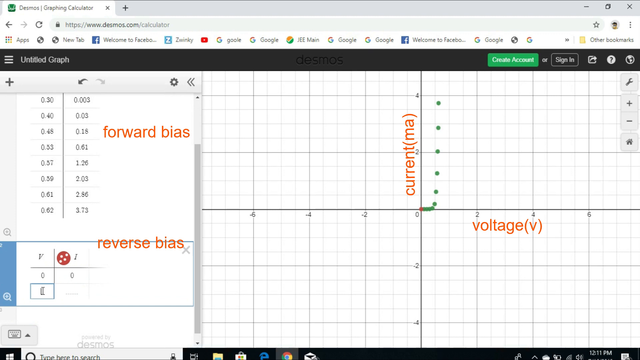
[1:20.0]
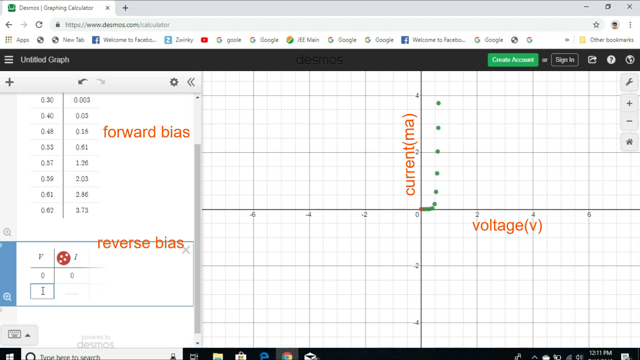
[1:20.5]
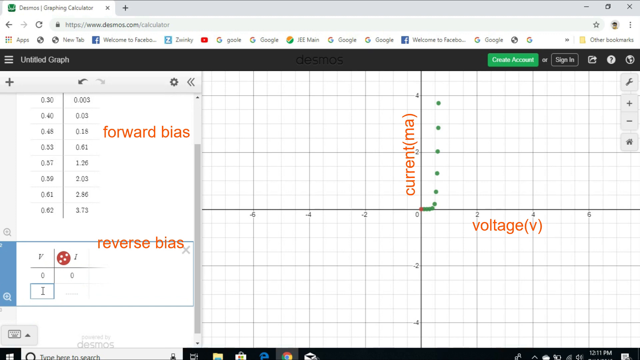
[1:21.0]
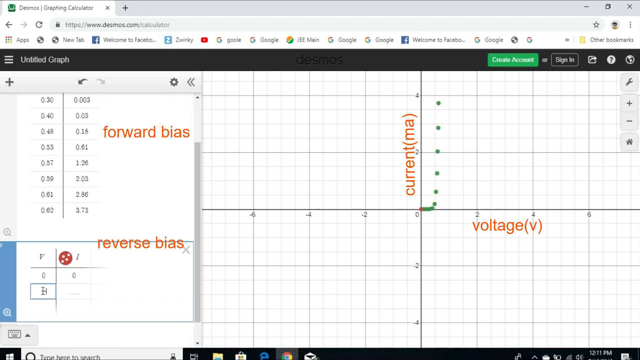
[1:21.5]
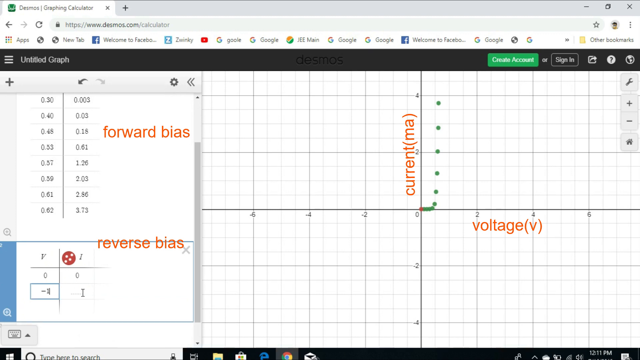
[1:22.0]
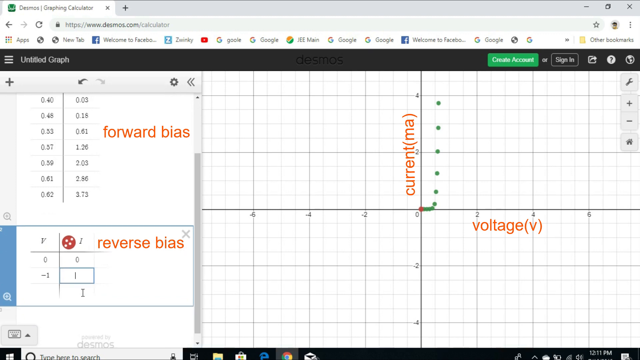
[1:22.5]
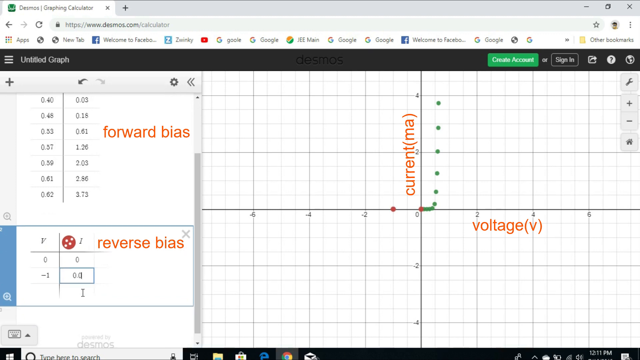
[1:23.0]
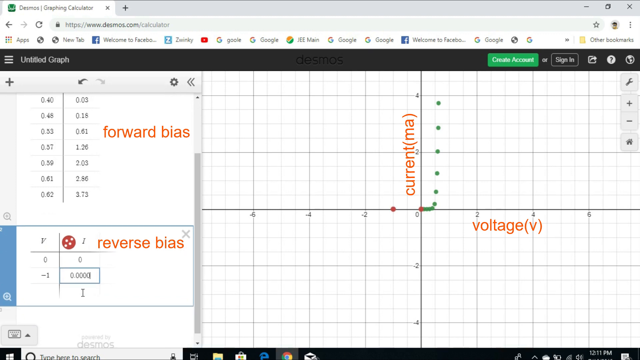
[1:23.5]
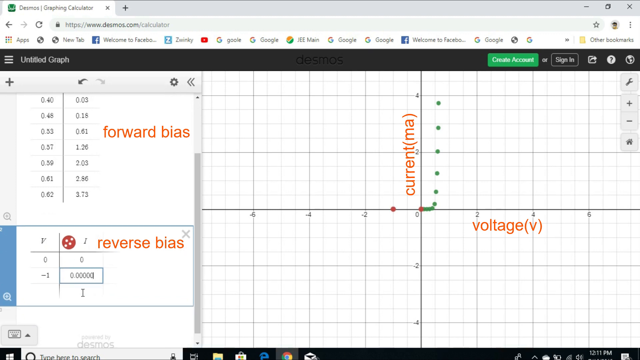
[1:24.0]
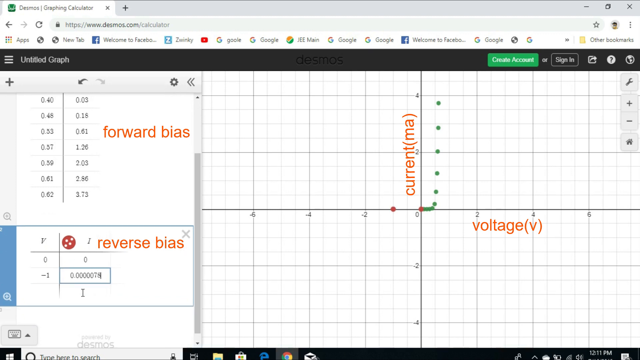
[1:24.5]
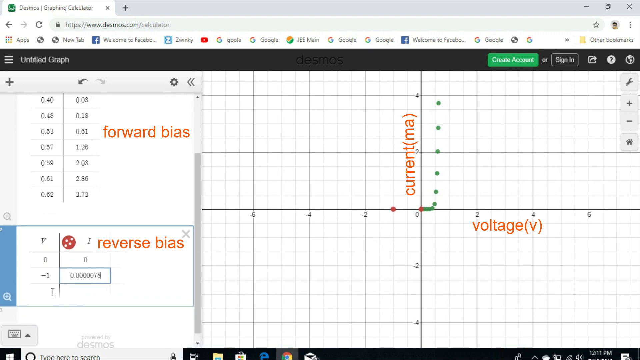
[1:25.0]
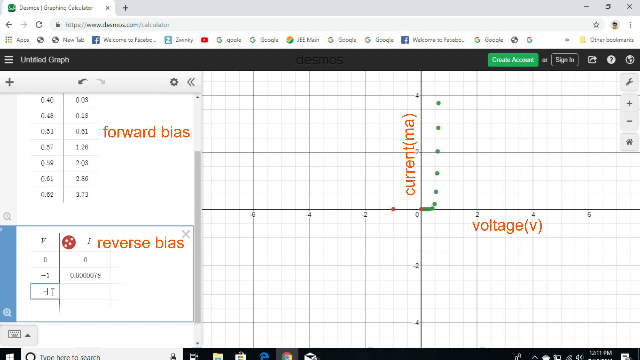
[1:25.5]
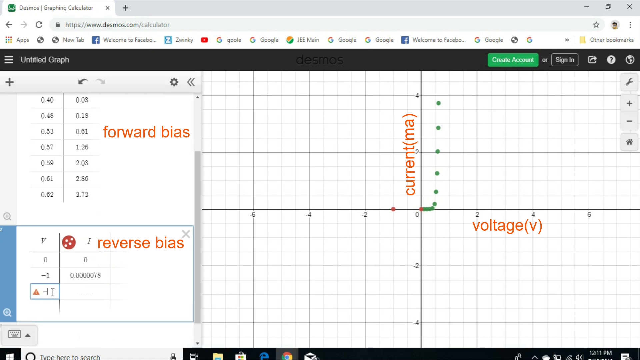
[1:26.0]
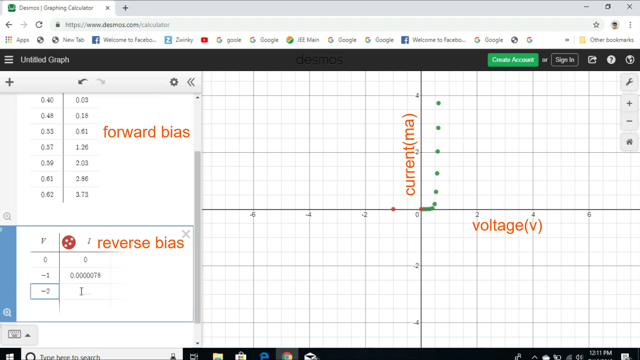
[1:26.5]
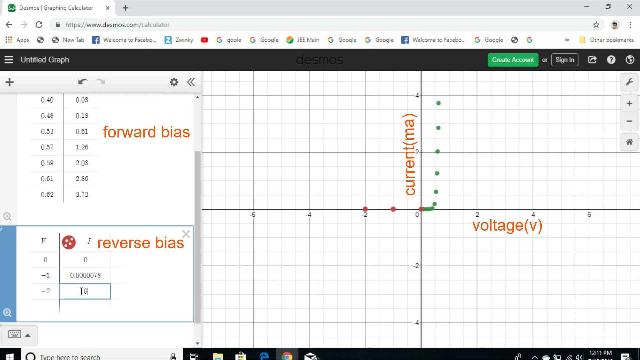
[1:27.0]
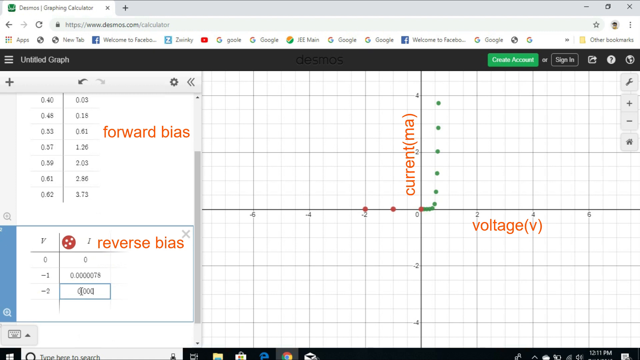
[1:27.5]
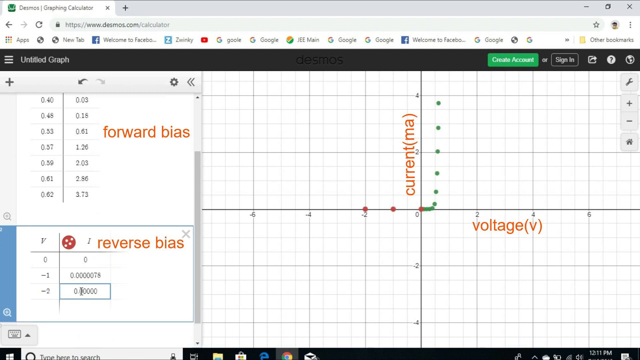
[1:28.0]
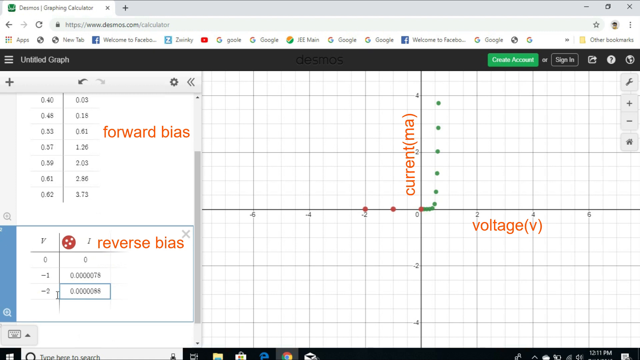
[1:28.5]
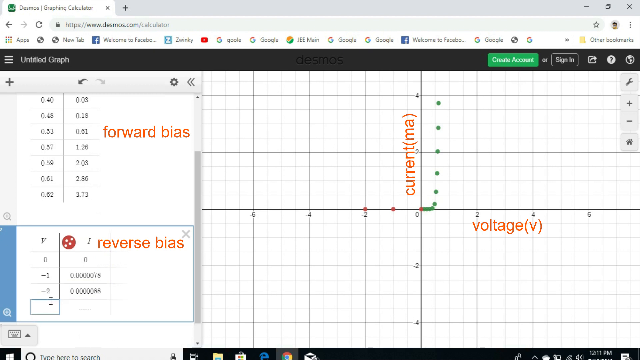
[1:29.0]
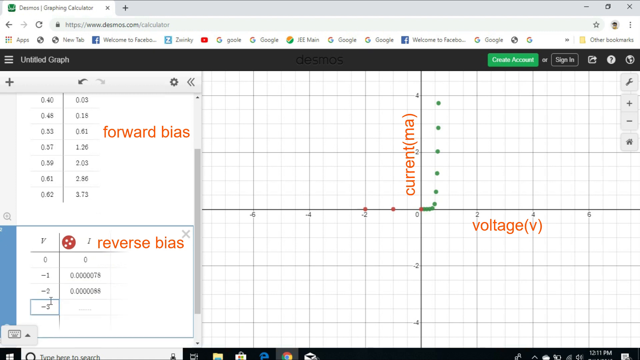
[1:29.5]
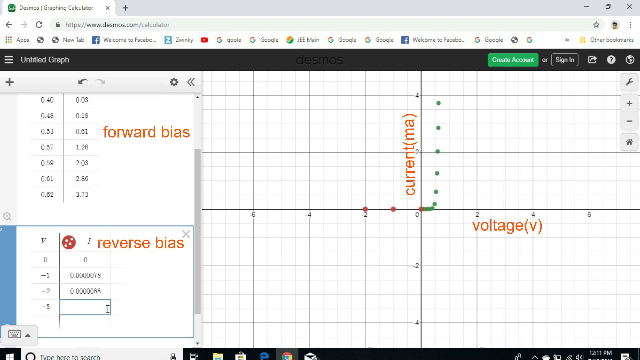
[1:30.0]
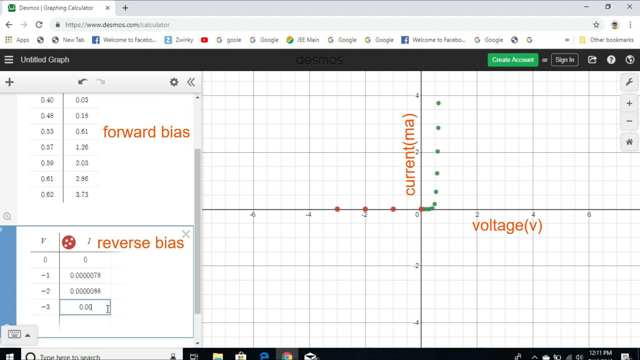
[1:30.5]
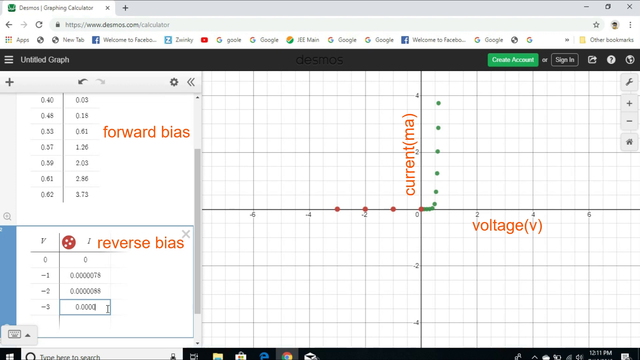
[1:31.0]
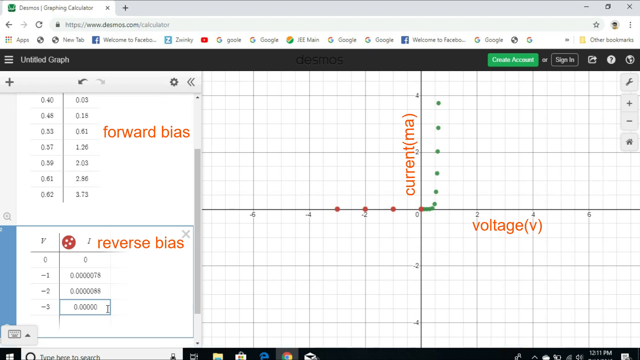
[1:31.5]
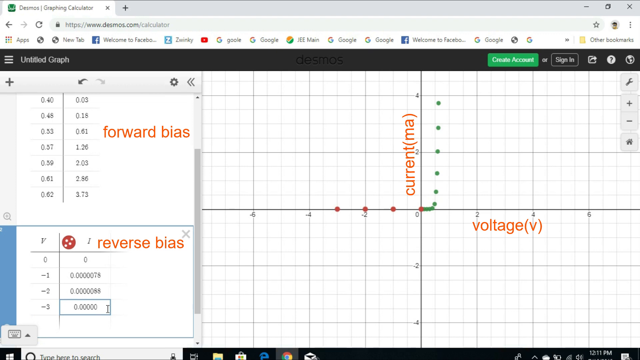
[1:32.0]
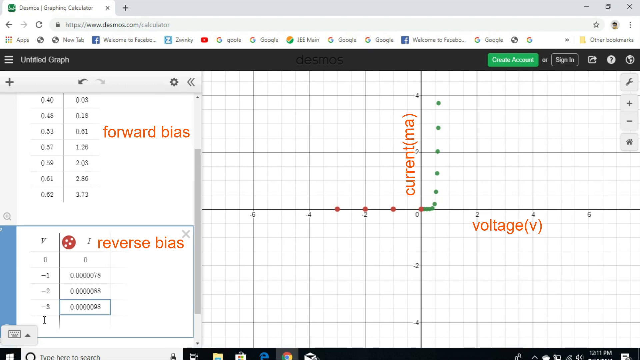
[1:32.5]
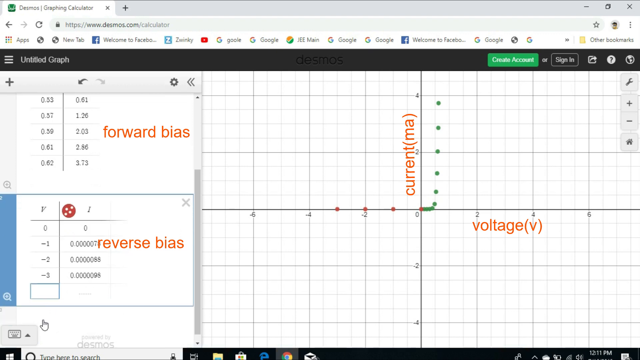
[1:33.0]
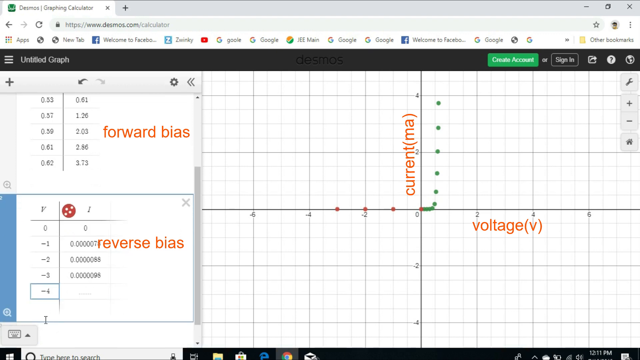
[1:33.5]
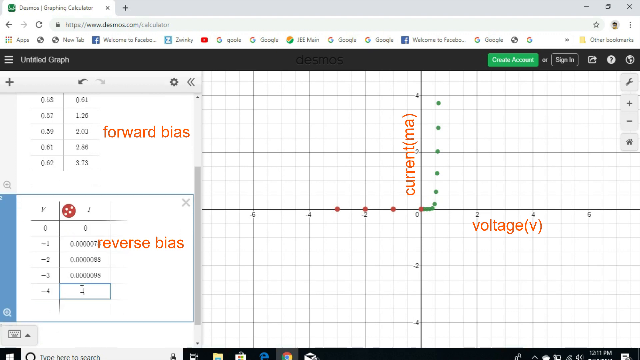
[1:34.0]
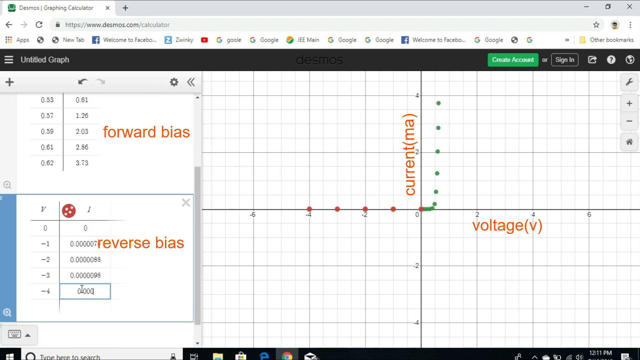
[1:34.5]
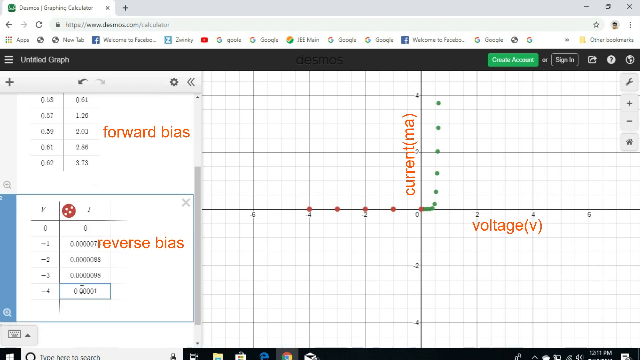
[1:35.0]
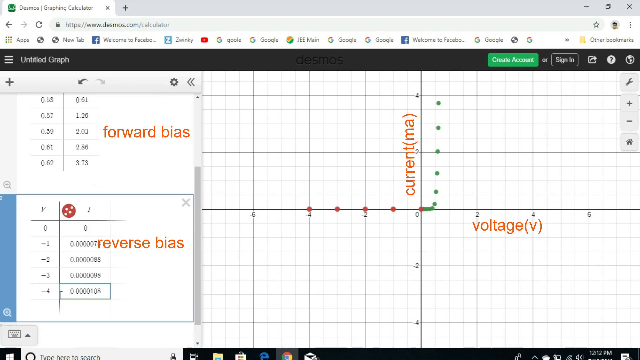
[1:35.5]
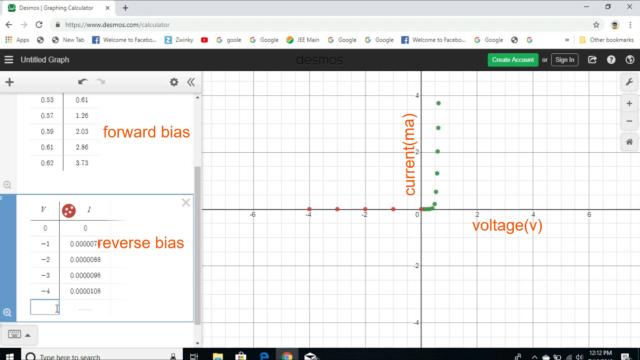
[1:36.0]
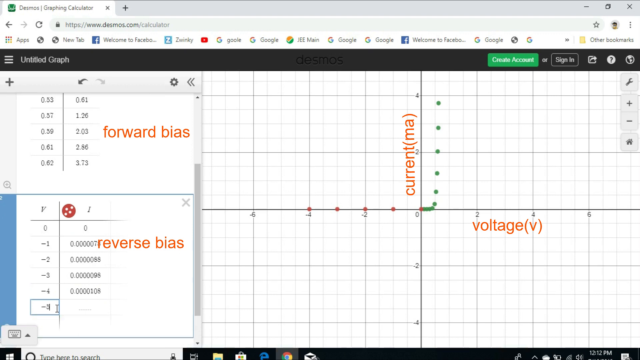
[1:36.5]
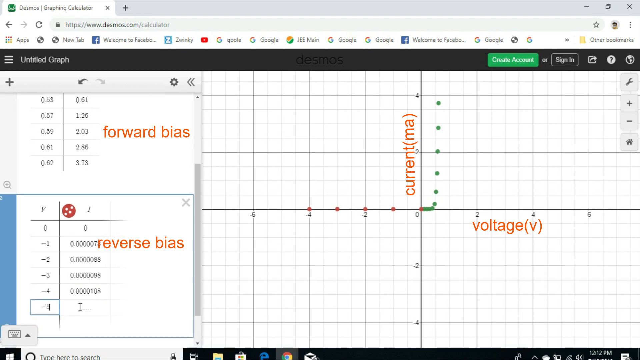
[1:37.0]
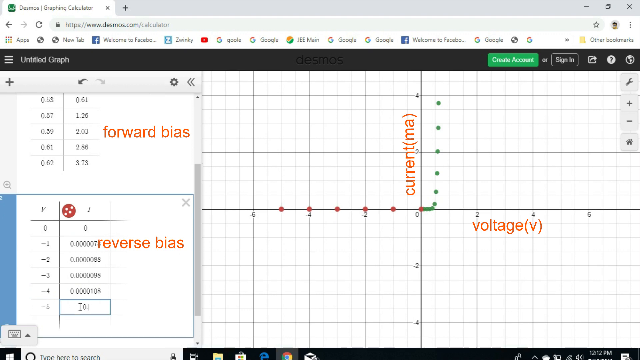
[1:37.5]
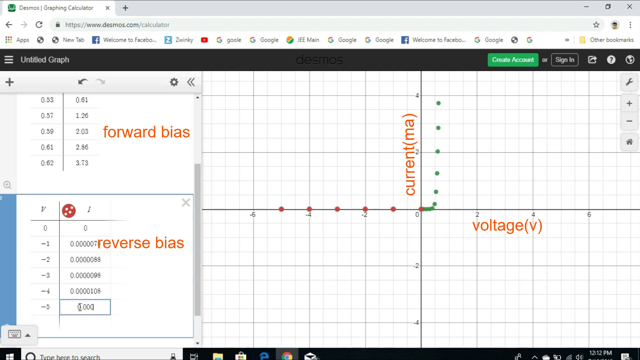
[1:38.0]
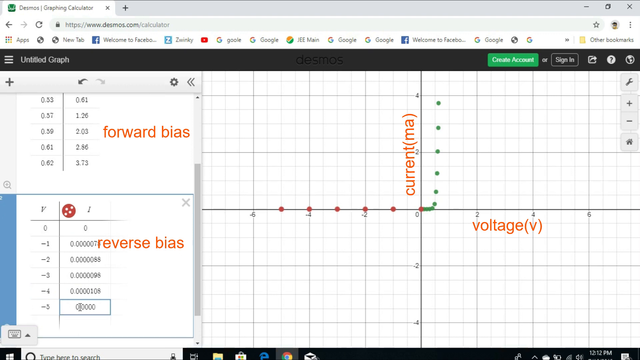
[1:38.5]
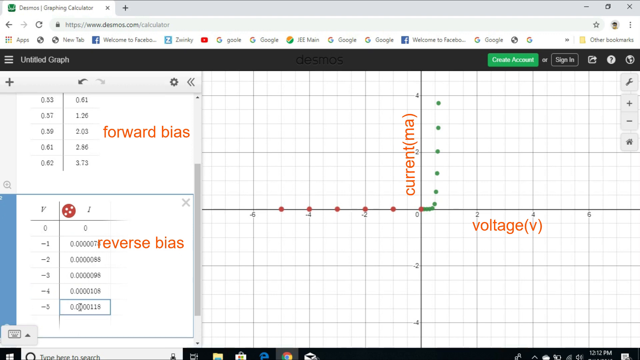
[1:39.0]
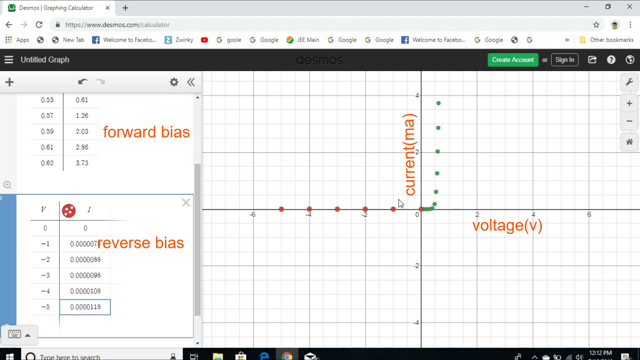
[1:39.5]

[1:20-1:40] Values are now added to the second table: 0 and 0 in the first row, then negative 1 and 0.0000078, negative 2 and 0.0000088, negative 3 and 0.0000095, negative 4 and 0.00000108, and negative 5 and 0.00000118. The graph seems to form a line of dots spaced equally apart, starting from the middle and extending to the left. The y-values look pretty much the same, with no visible difference, apparently because the graph is not zoomed in enough for the scale. These dots are red, while the first table's dots were green.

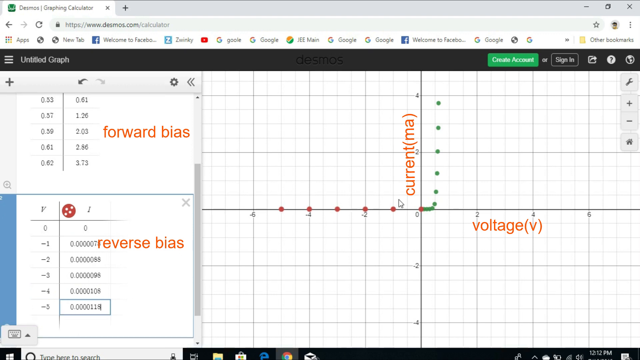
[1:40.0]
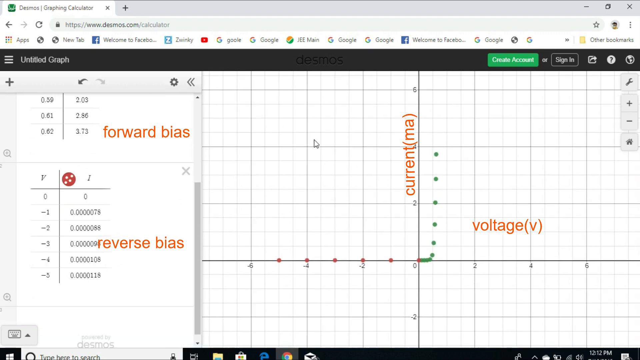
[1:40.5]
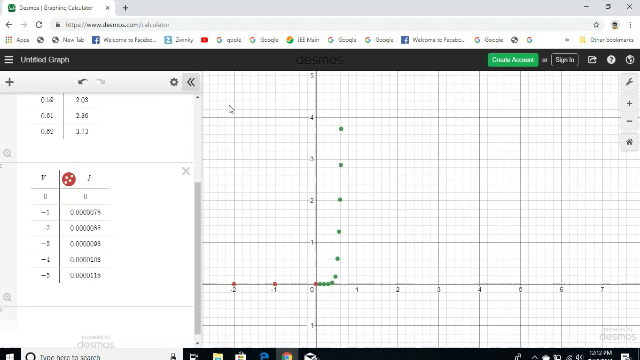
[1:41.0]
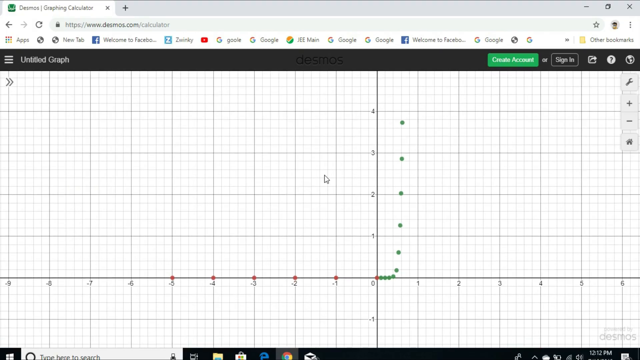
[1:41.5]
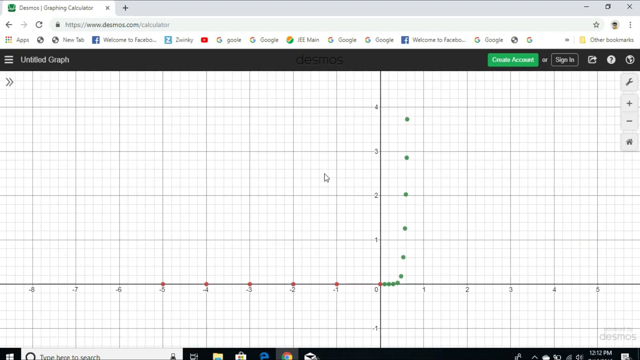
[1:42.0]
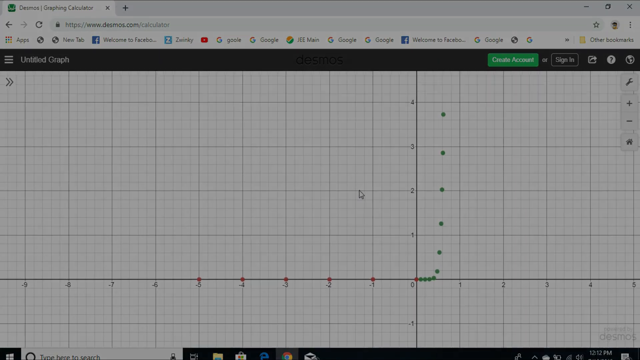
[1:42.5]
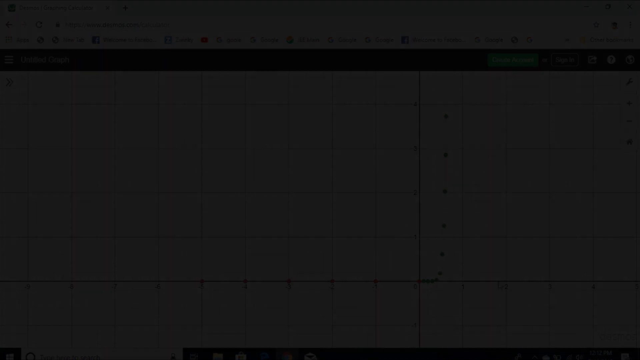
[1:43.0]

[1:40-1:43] The person reaches negative five and enters its value in the Y column, then closes the tab so that it is hidden, leaving the graph in view. It shows red dots on the left side of the y-axis and green dots forming a very steep curve on the right side of zero. The person slightly zooms in and out frantically on the graph in the middle, and then the video fades to black. The second table is annotated in orange words with "reverse bias", while the first table was labeled "forward bias".